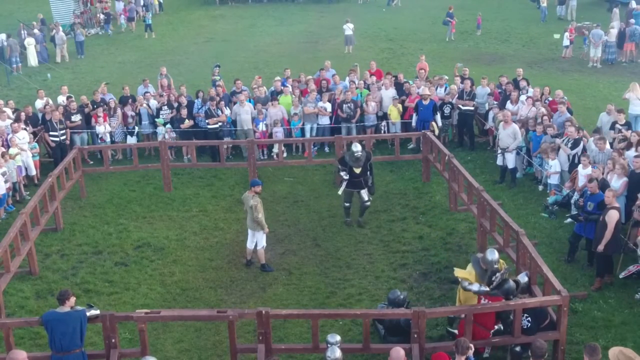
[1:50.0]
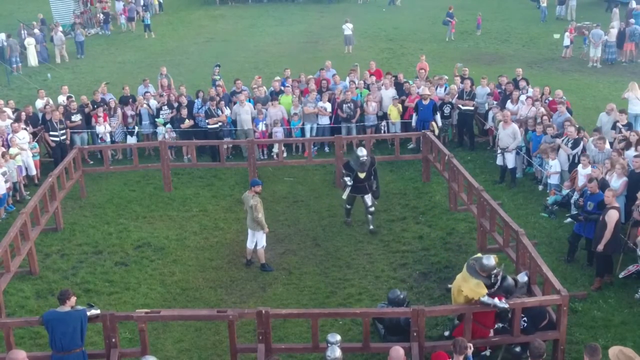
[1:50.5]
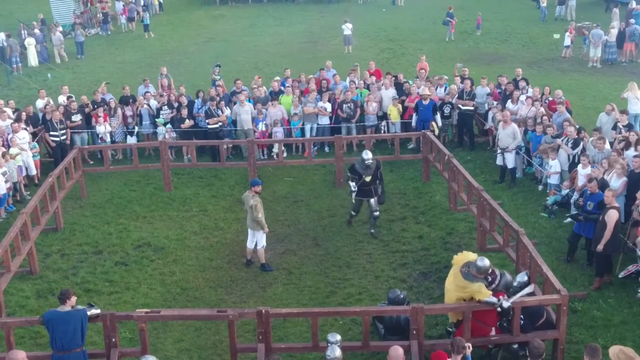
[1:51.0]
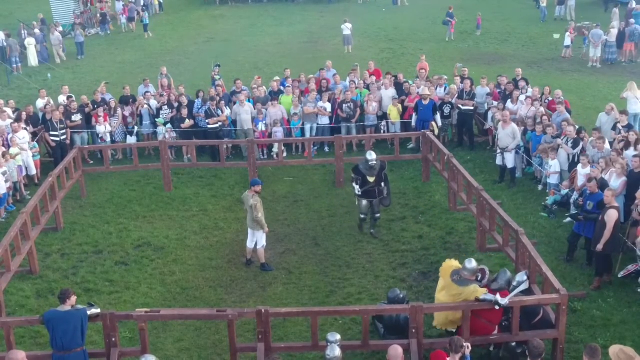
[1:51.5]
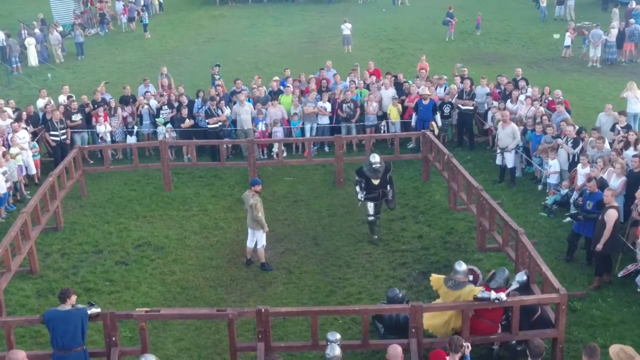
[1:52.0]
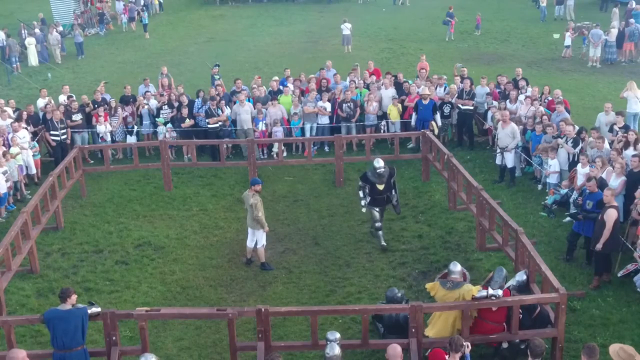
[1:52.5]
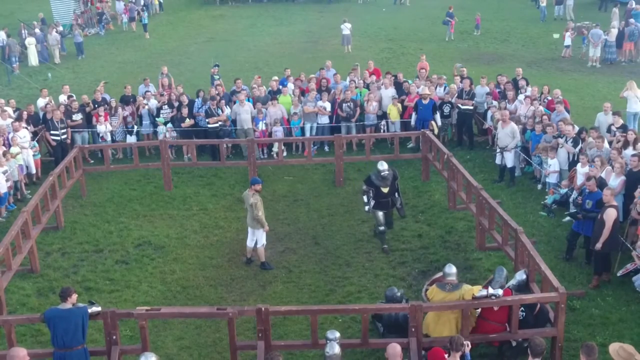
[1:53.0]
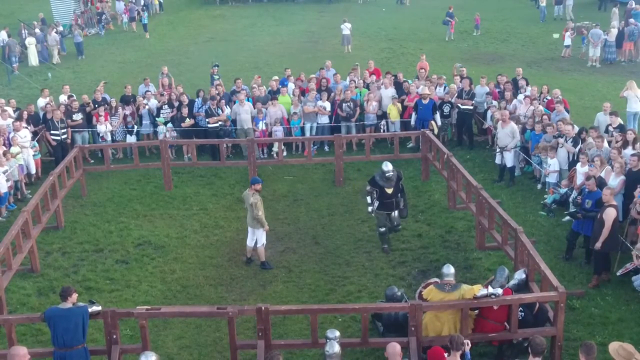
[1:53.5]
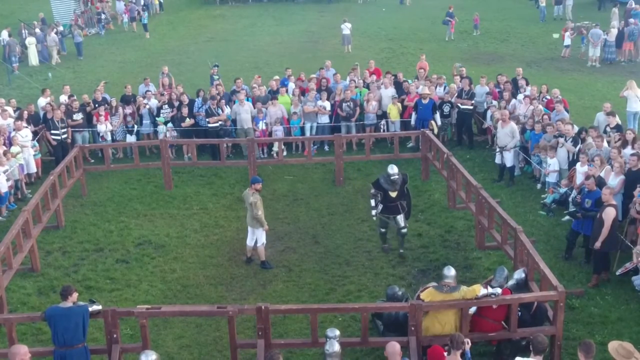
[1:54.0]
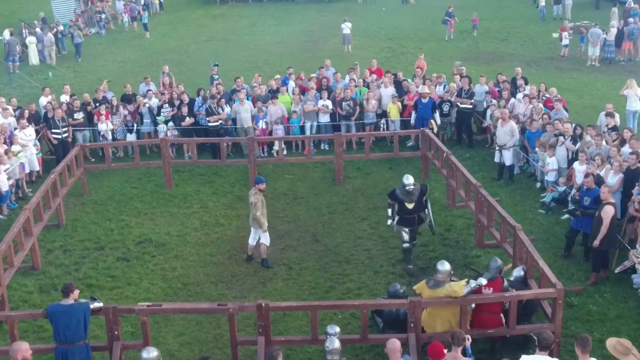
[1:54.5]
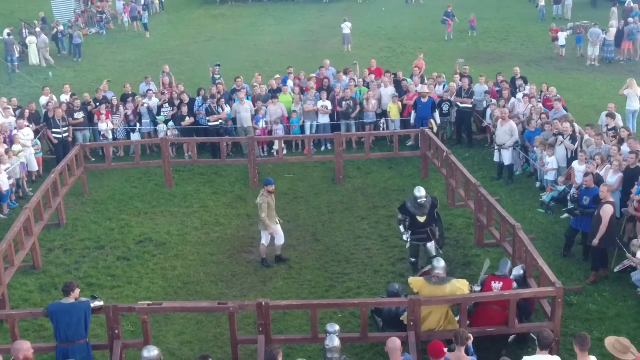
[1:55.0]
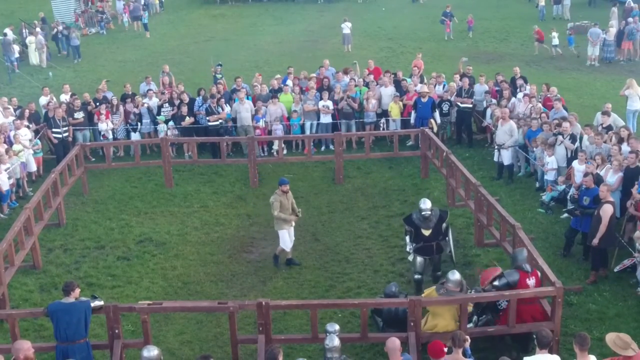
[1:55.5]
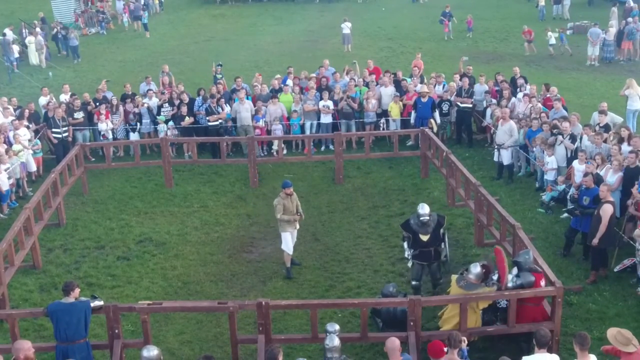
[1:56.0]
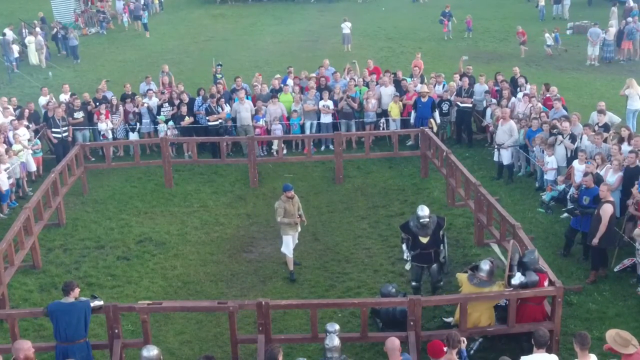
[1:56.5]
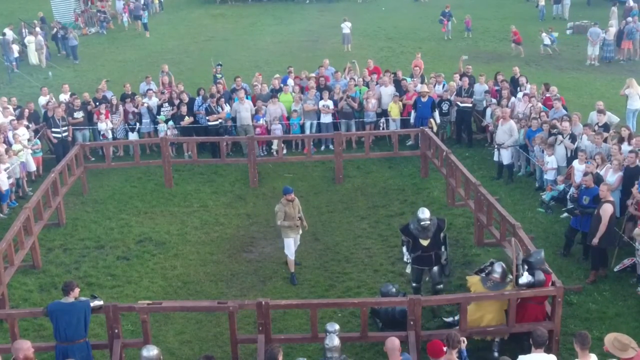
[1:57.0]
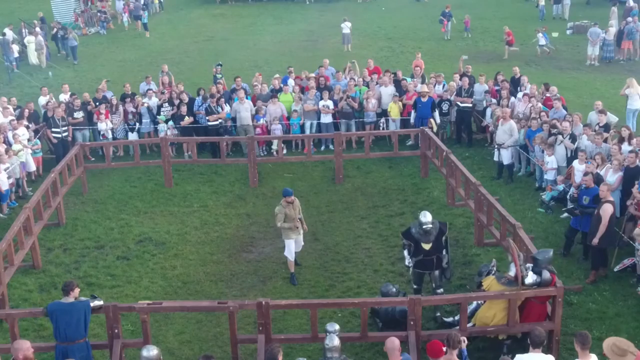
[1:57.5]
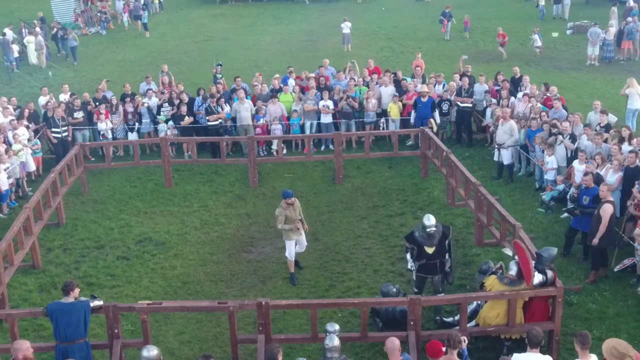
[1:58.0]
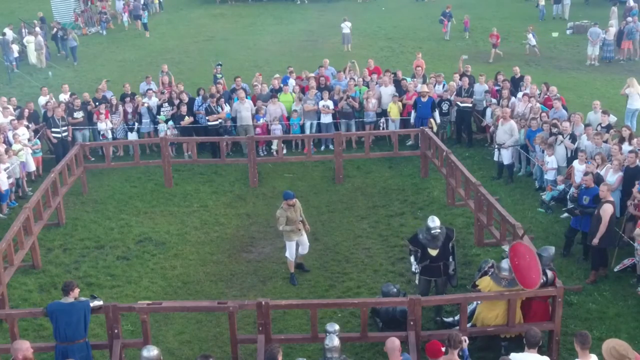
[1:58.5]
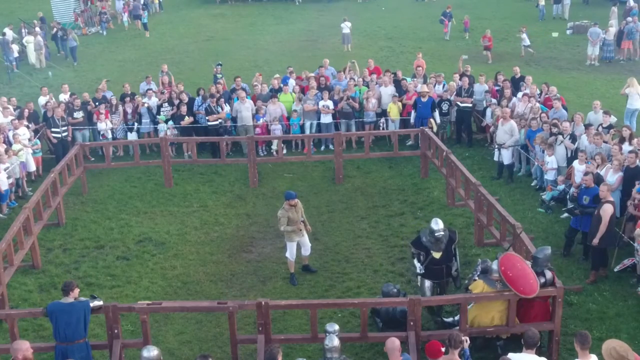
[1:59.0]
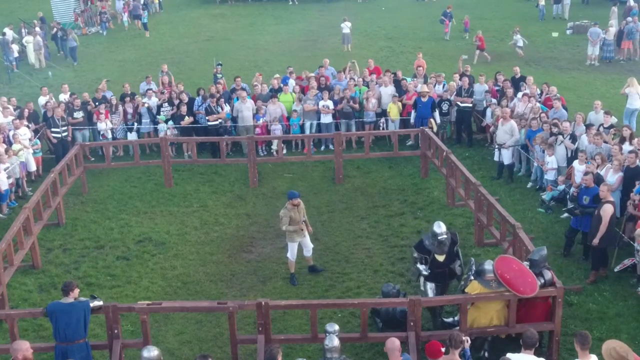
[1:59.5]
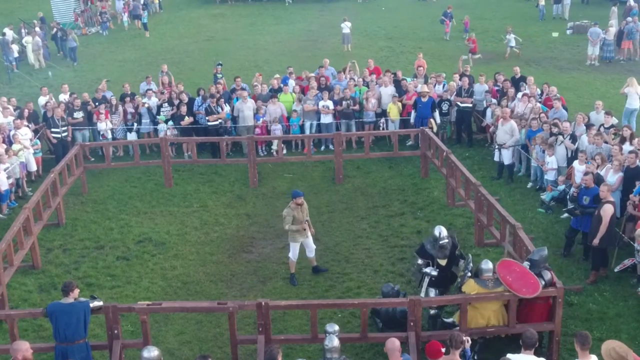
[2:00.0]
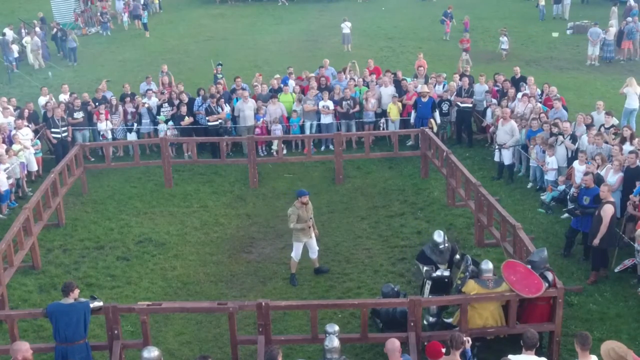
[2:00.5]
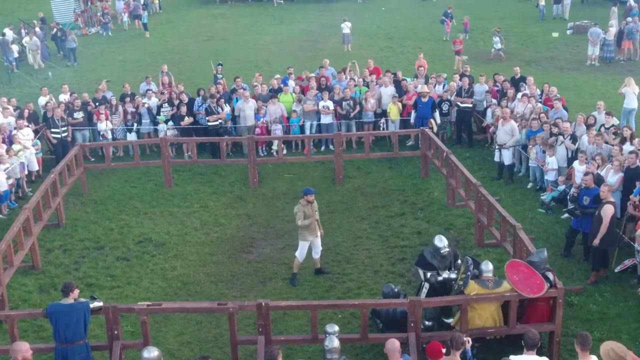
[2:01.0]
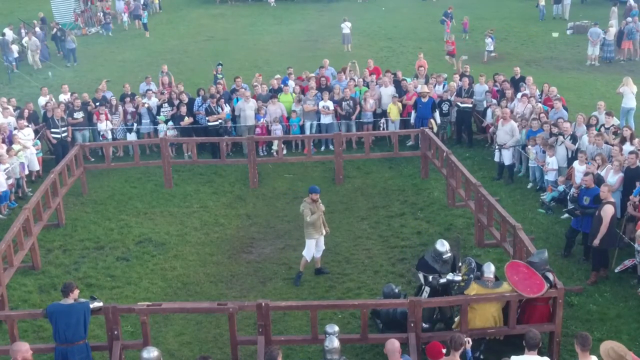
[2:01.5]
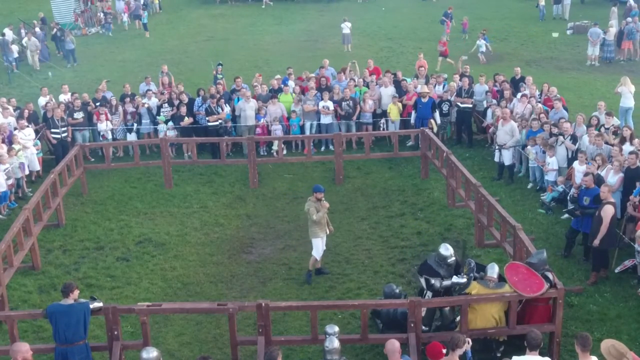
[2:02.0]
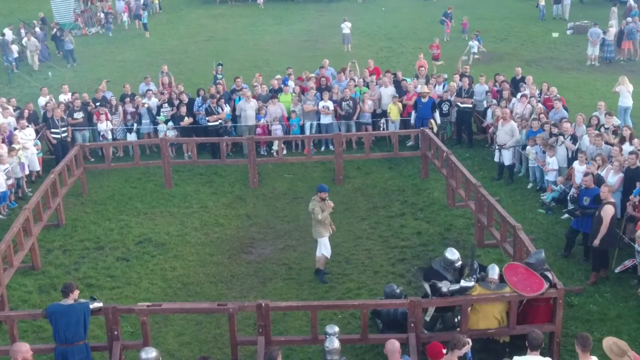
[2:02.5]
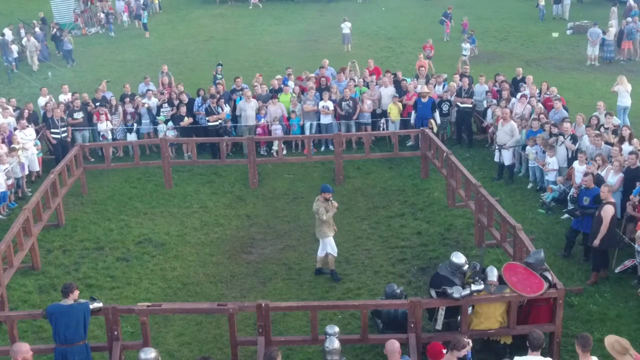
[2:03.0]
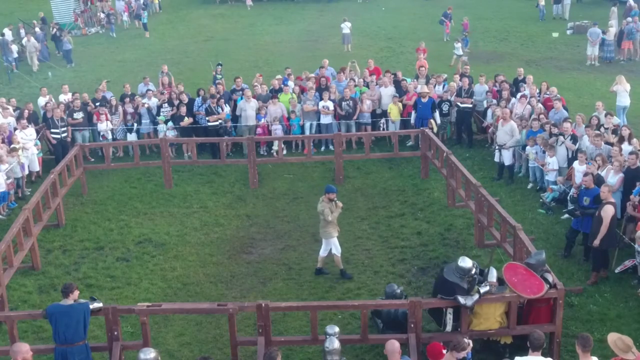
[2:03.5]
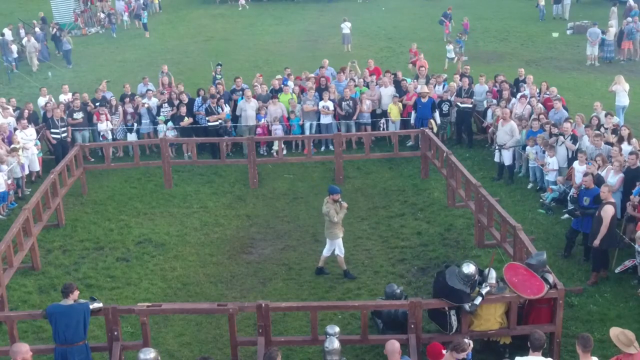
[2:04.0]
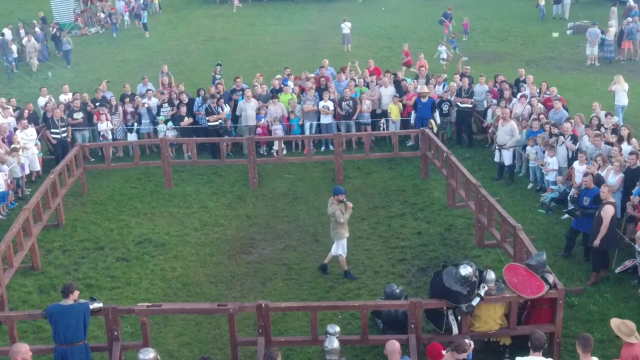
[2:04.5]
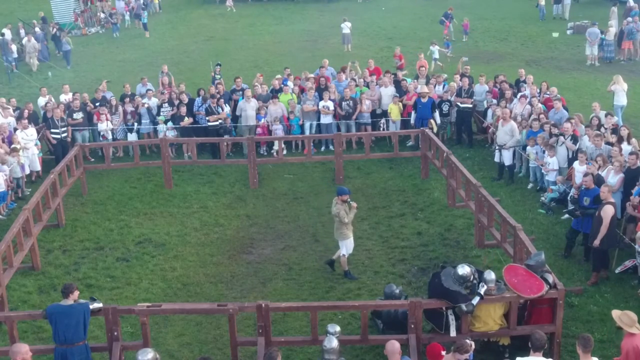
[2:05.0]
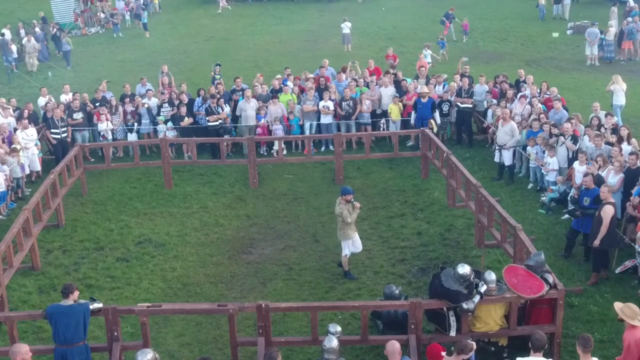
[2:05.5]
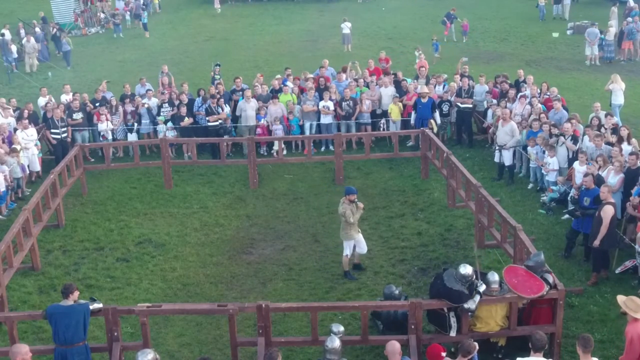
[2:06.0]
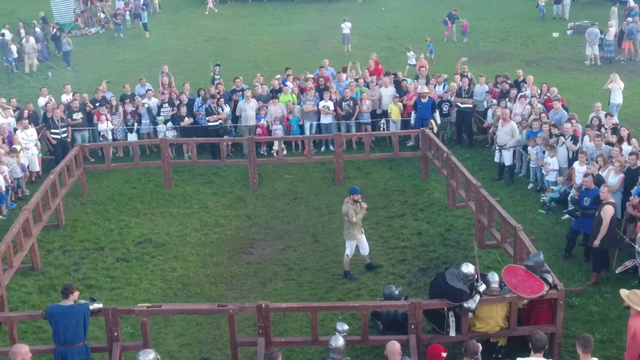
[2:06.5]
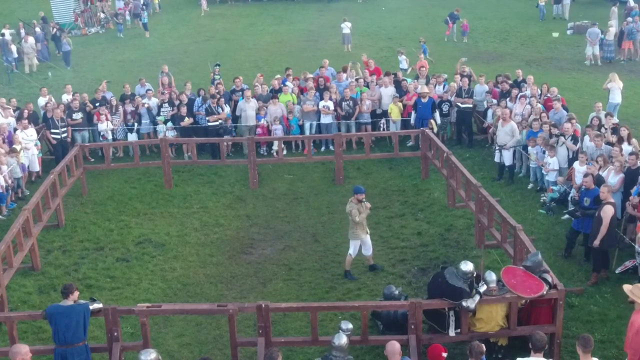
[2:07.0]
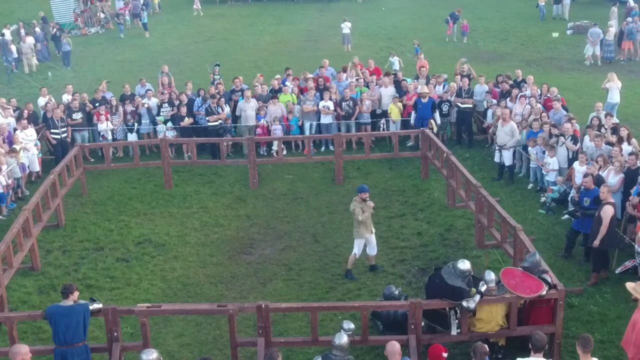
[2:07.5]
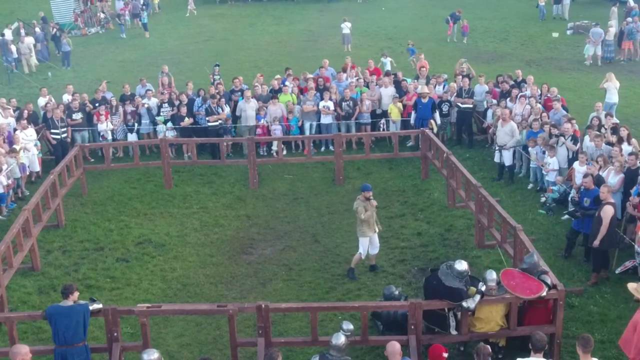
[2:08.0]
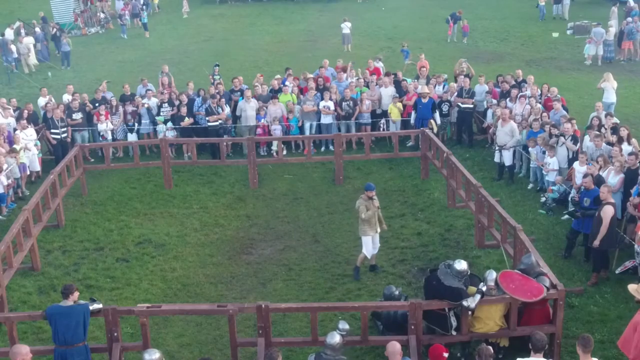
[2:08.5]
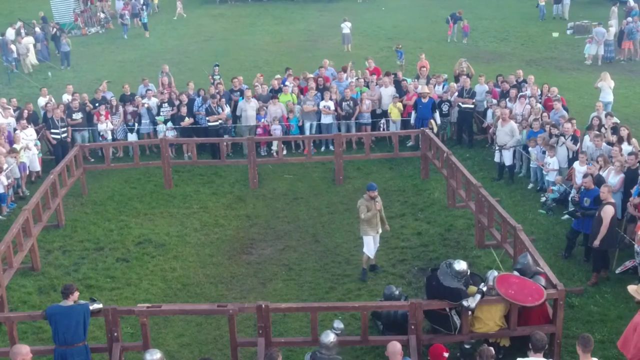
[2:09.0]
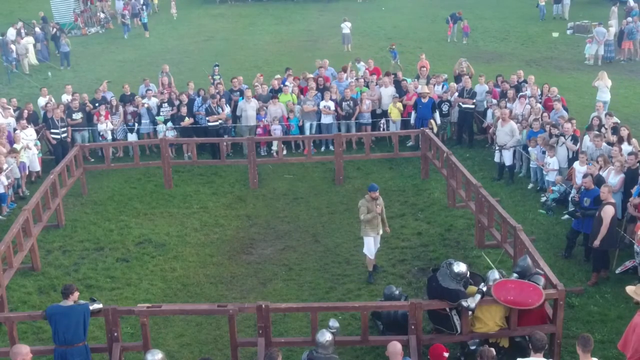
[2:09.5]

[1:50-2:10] The fighter in yellow appears to be attempting to pull the fighter in red away, grabbing onto him with his left arm and holding onto the railing for leverage. He pulls backward, but the knight in red appears to break free. The knight in yellow then takes a swing at the other knight with his weapon, but it seems to deflect off the armor. The fighter in dark blue is now very close and reaches out; he appears to grab the fighter in yellow and pin him against the railing with the help of the fighter in red. The fighter in black appears to have been temporarily taken out of the fight. In the background, there appears to be a person carrying balloons, sprinting across the open ground. The non-combatant is now very close to the people in the corner, but he is standing by.